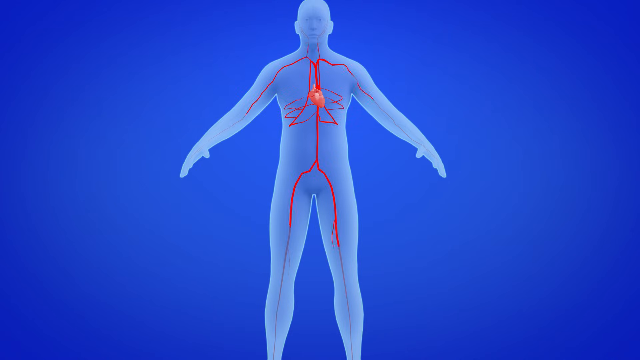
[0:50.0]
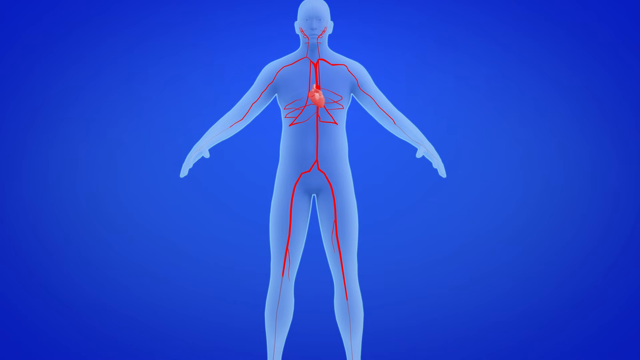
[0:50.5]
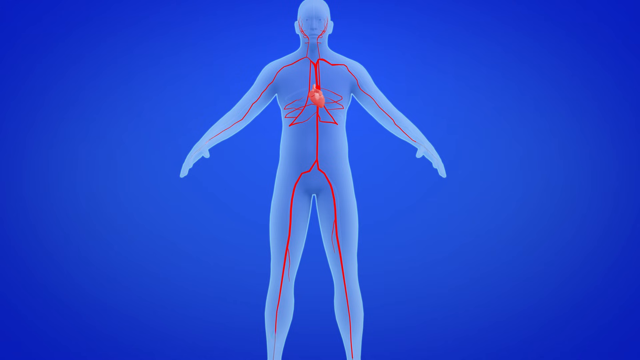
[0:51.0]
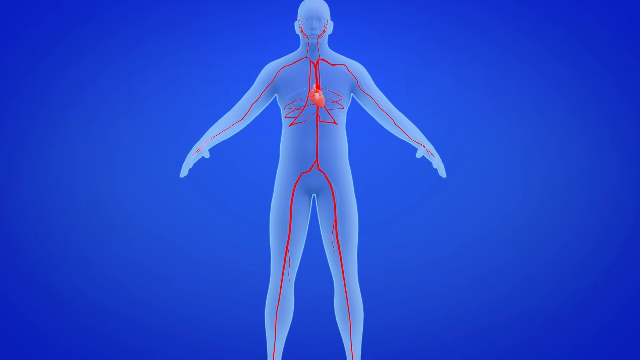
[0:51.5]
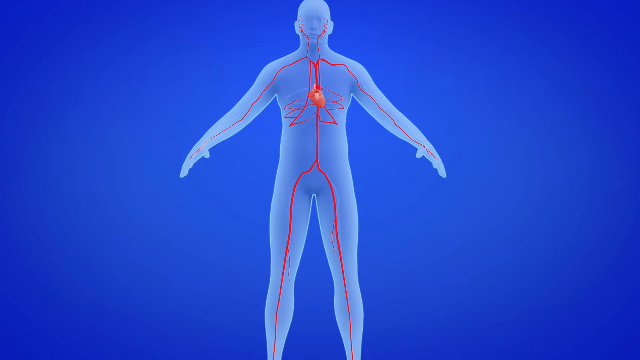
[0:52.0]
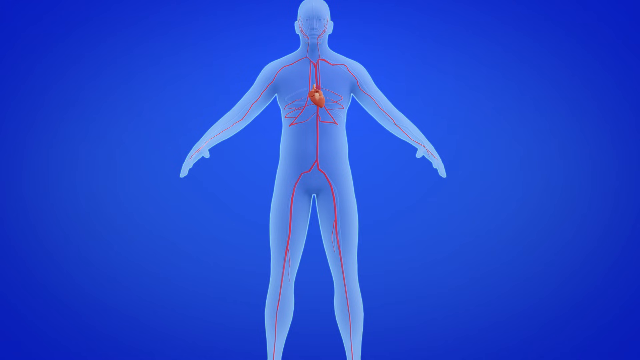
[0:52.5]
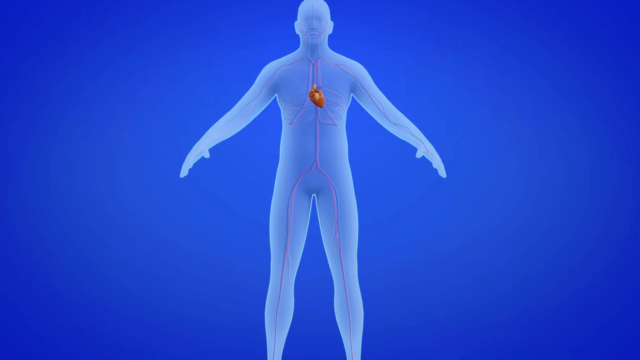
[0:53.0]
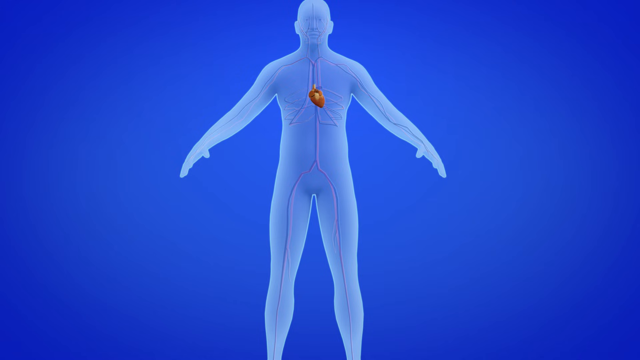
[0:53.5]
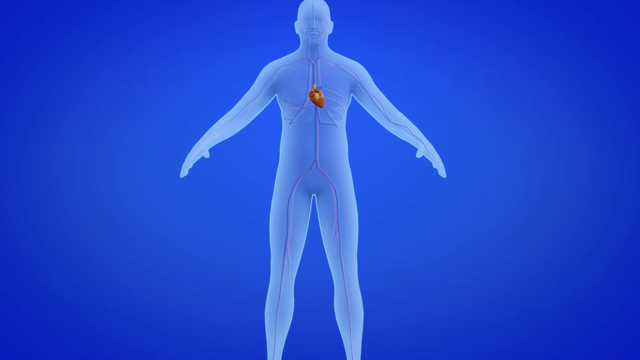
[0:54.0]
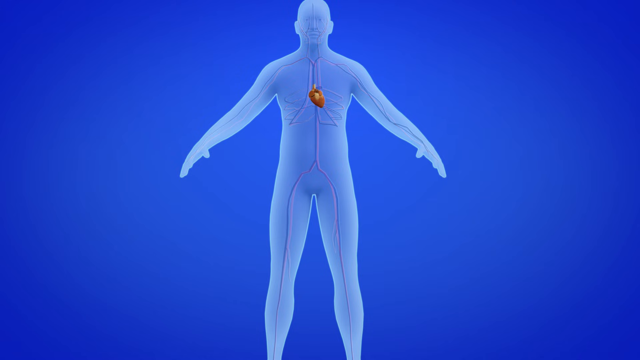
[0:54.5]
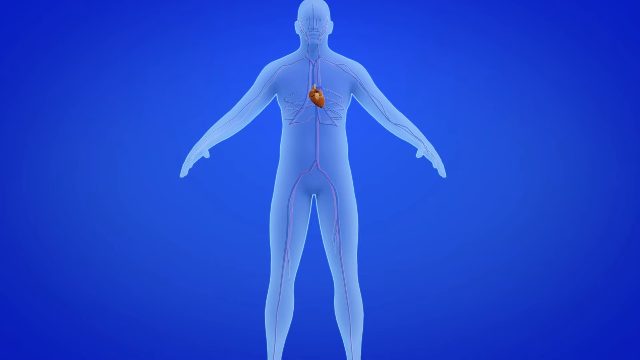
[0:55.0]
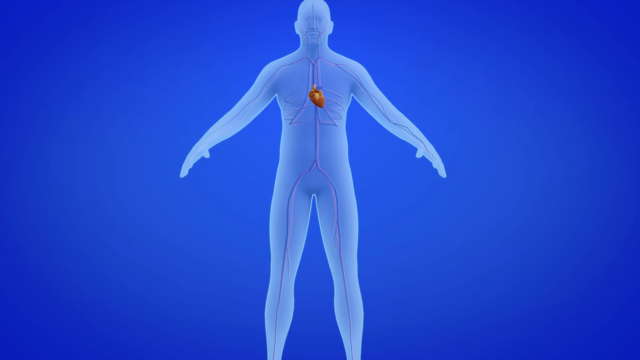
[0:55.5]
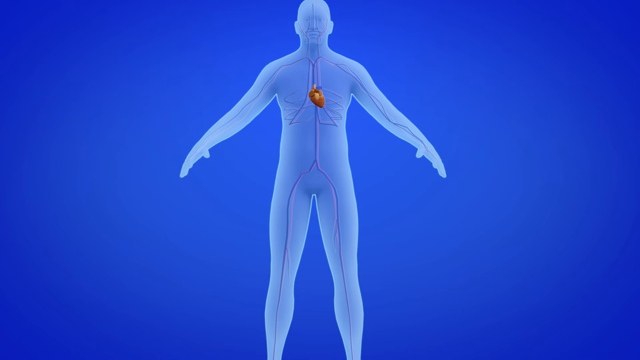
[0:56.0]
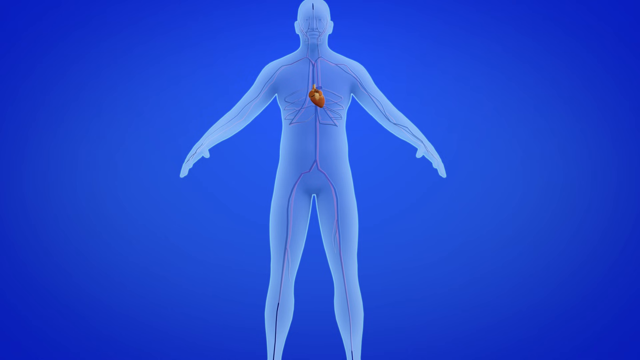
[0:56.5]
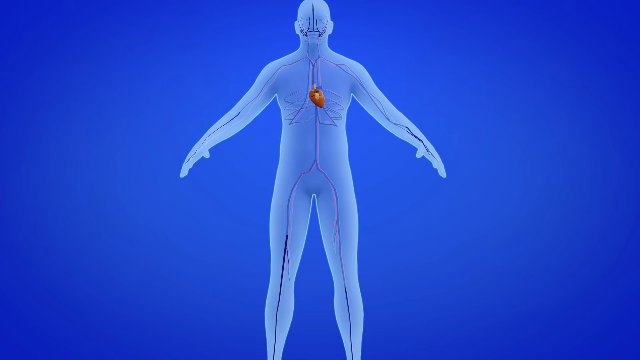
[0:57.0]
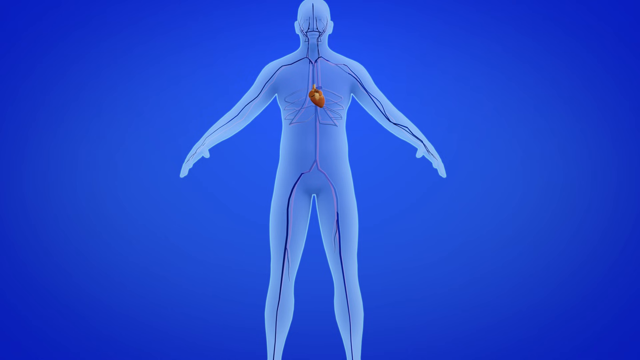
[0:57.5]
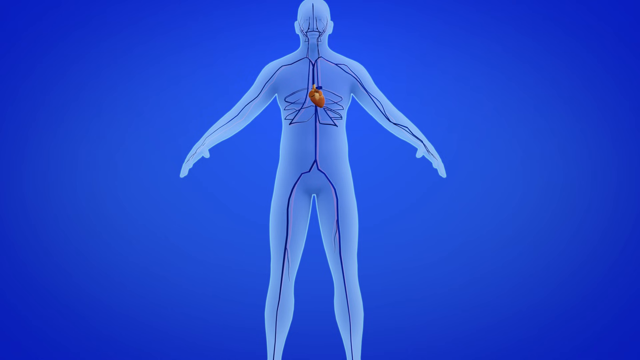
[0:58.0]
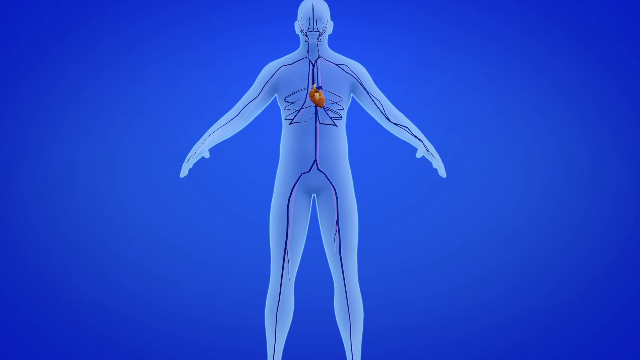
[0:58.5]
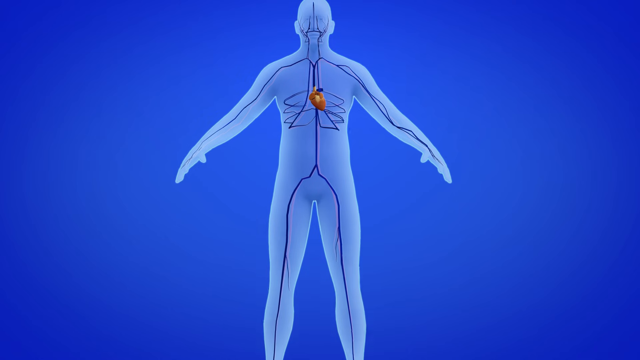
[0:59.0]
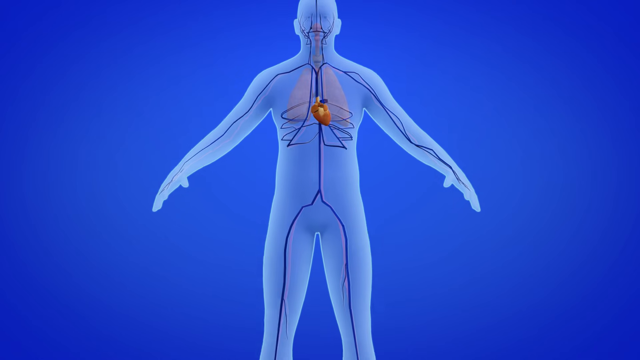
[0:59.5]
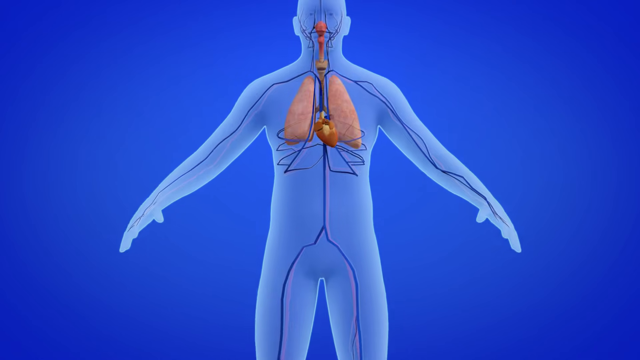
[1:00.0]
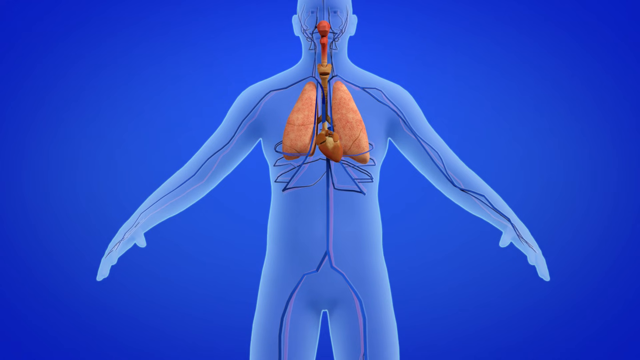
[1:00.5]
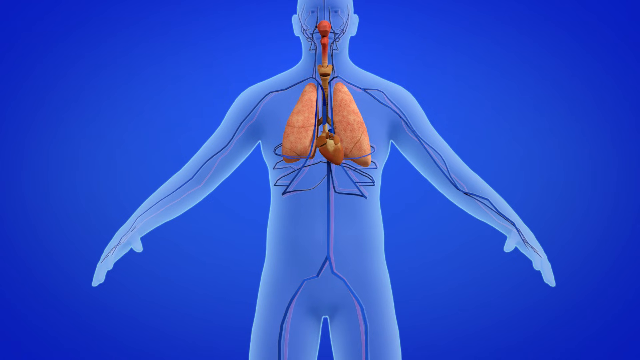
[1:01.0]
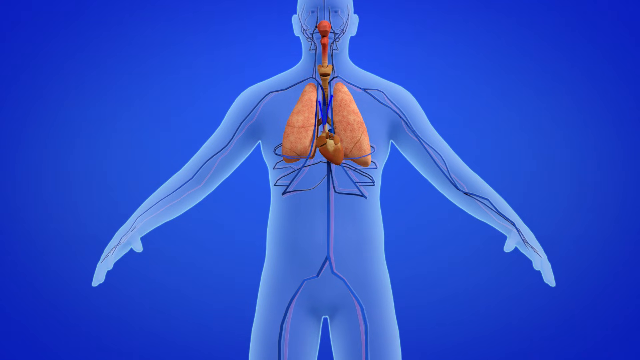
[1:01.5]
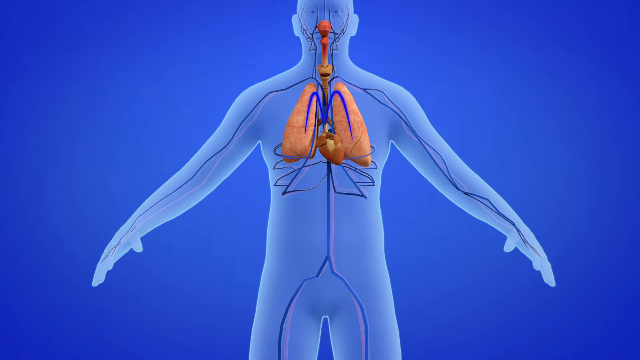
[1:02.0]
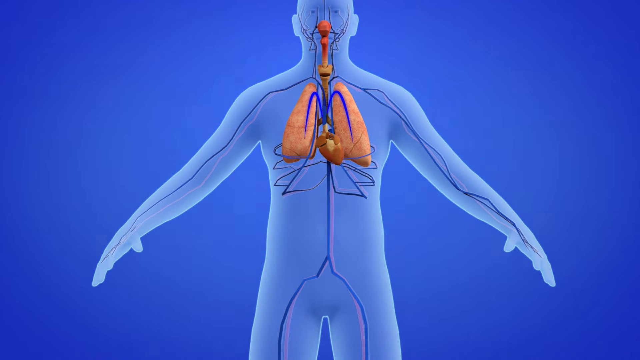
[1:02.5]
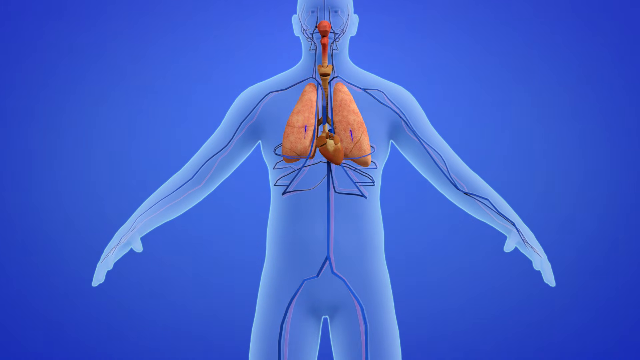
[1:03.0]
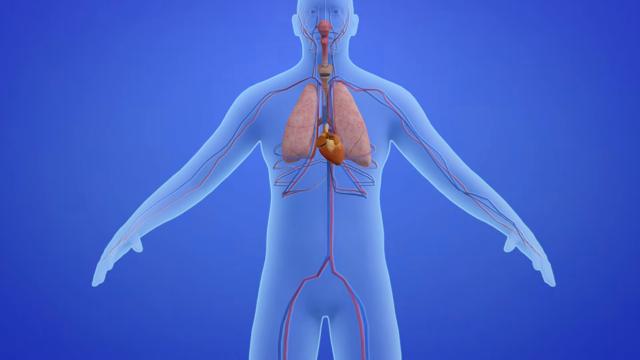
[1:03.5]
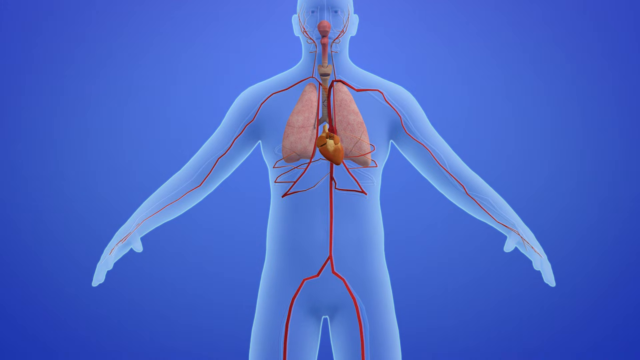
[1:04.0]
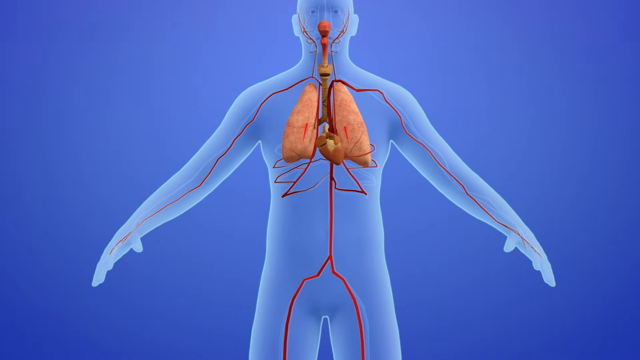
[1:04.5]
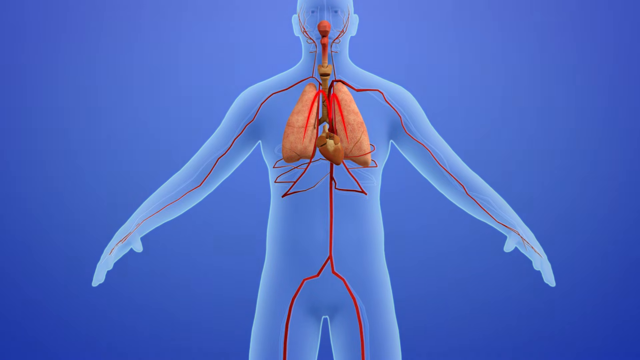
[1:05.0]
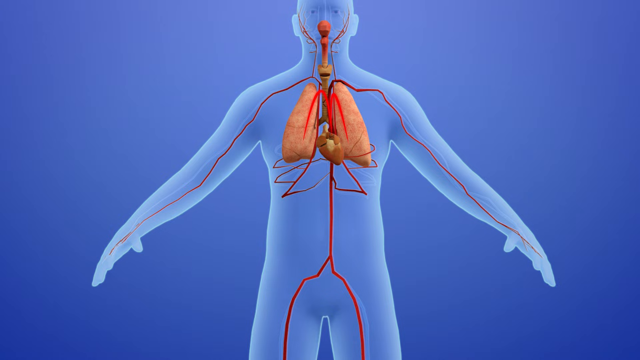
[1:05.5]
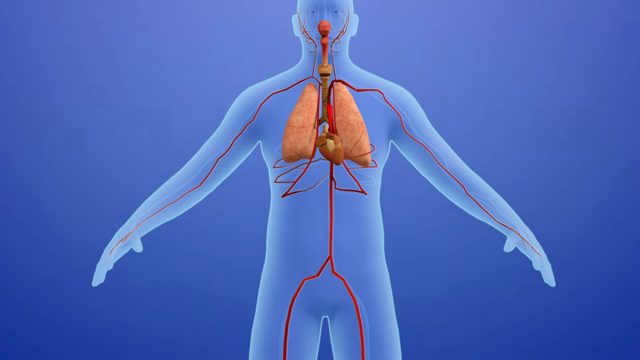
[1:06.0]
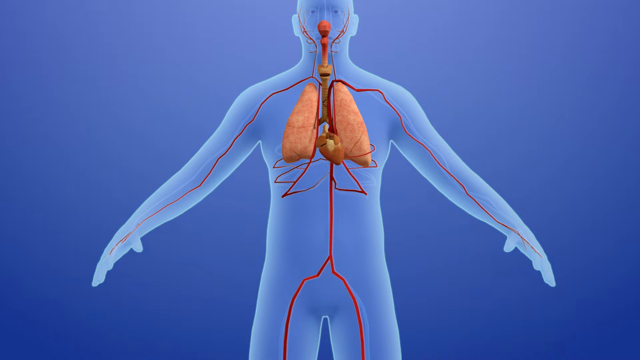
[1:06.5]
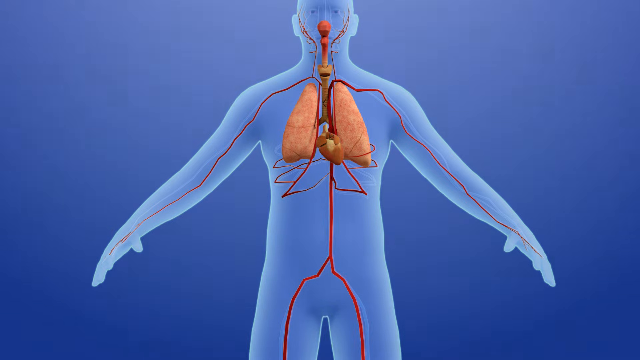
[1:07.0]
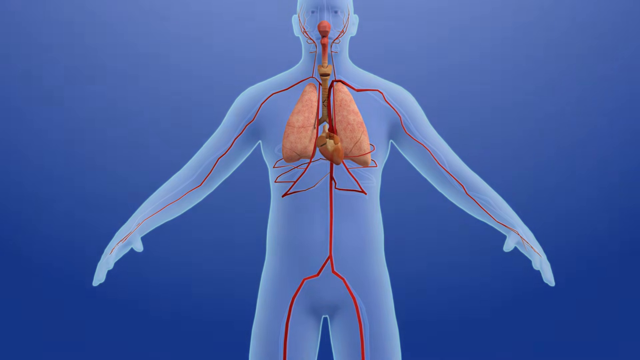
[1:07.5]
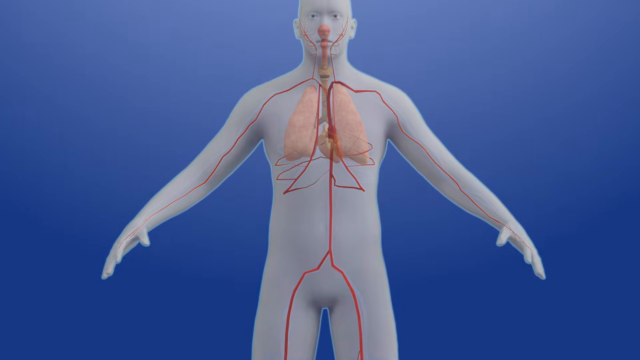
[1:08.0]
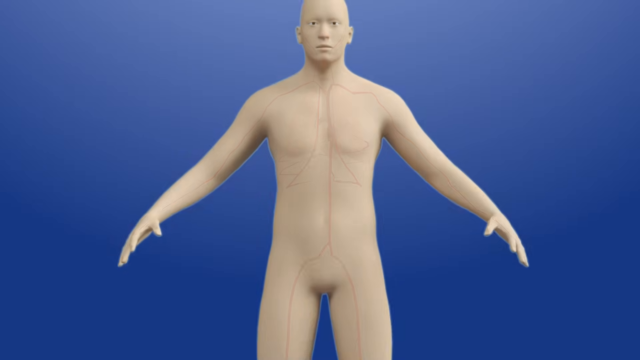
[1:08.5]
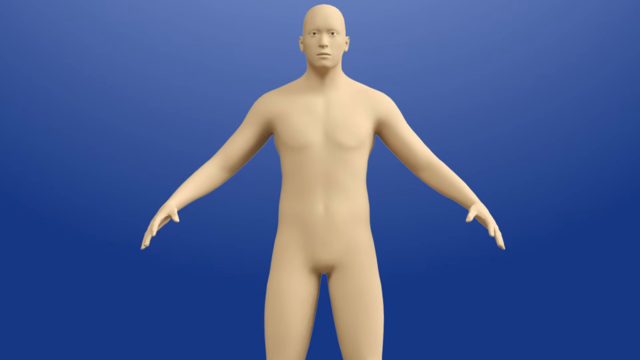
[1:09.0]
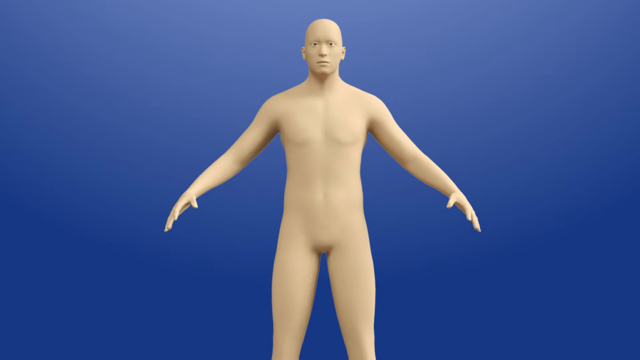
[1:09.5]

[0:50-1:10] Red arteries connected to the heart appear again. A scan of the body is shown, and then blue lines, the veins, also appear. The view zooms into the lungs again, with blue veins and red arteries, and these lines seem to be connected to the lungs. The trachea and esophagus, connected with the lungs, are also visible.